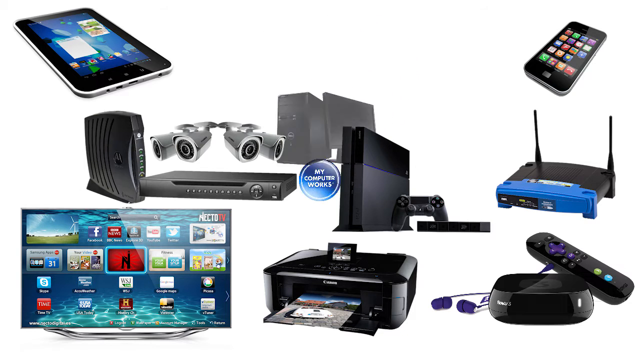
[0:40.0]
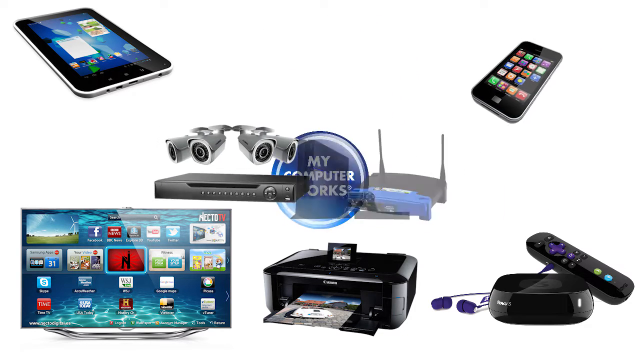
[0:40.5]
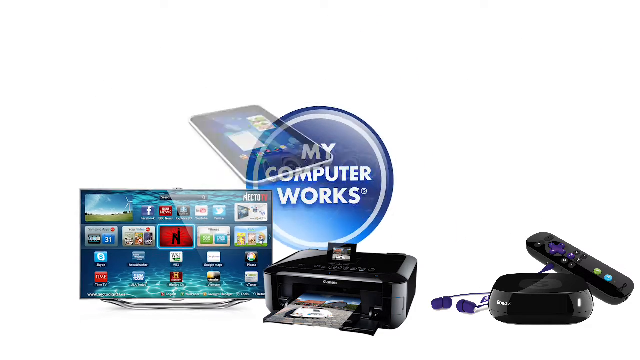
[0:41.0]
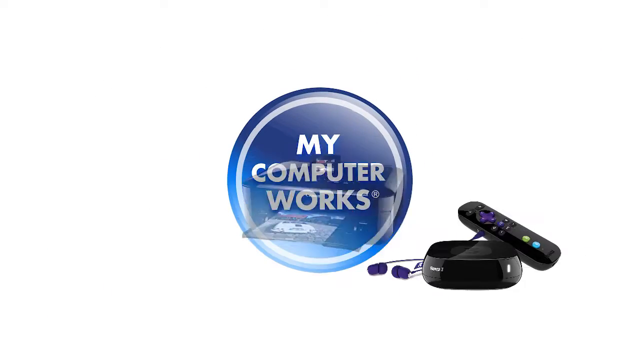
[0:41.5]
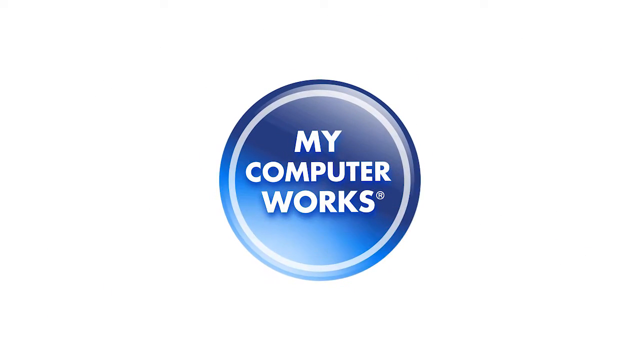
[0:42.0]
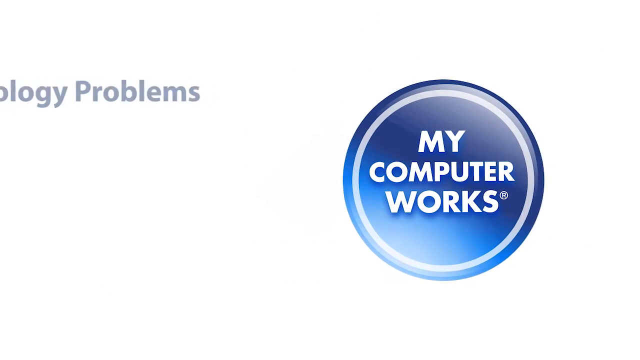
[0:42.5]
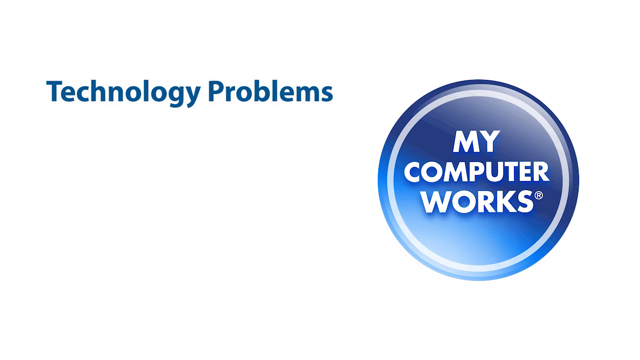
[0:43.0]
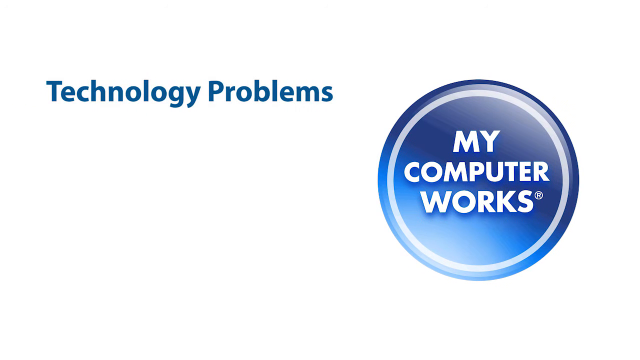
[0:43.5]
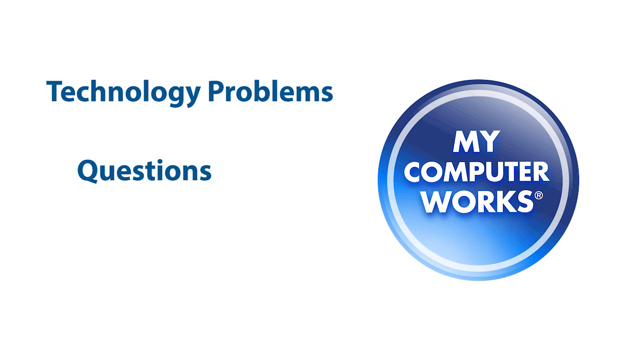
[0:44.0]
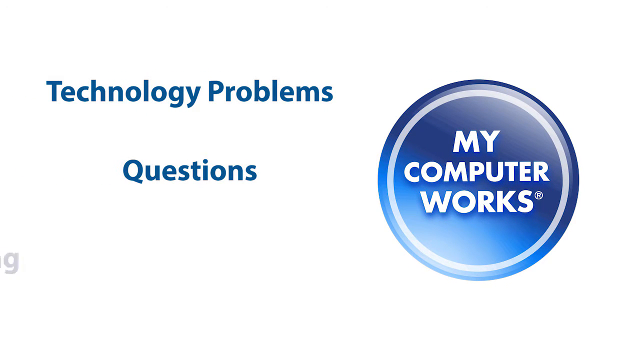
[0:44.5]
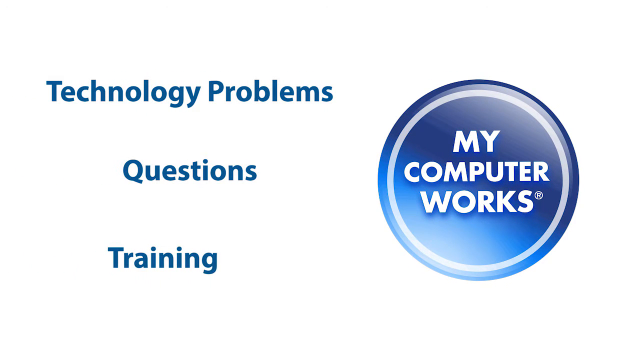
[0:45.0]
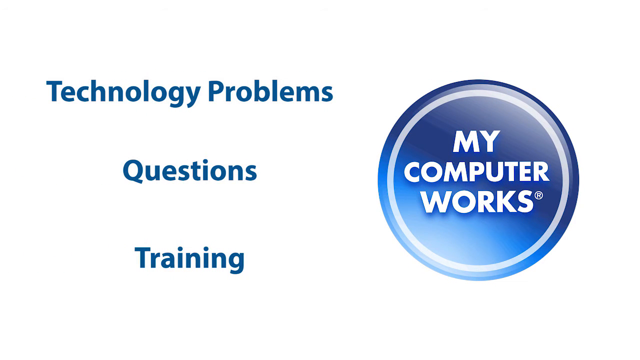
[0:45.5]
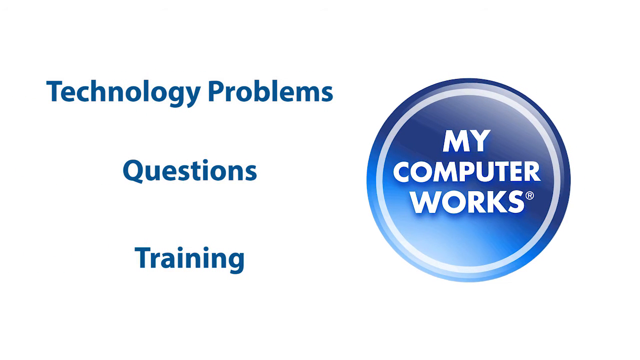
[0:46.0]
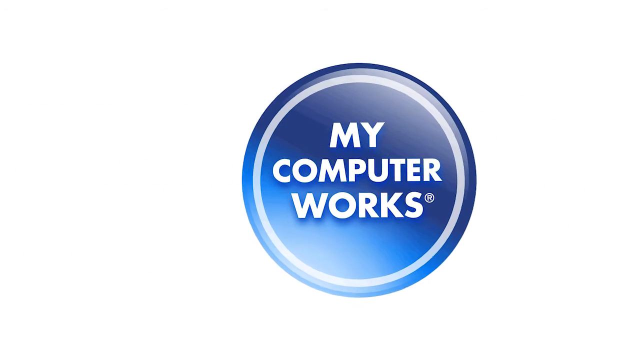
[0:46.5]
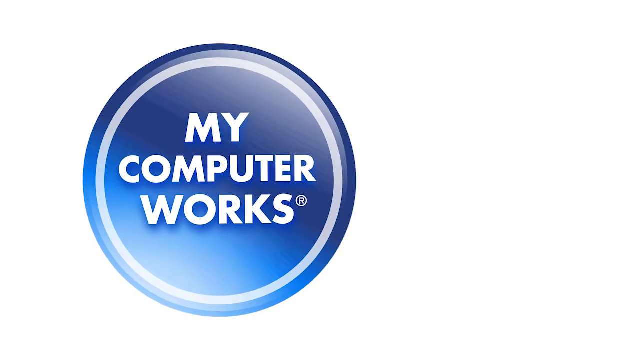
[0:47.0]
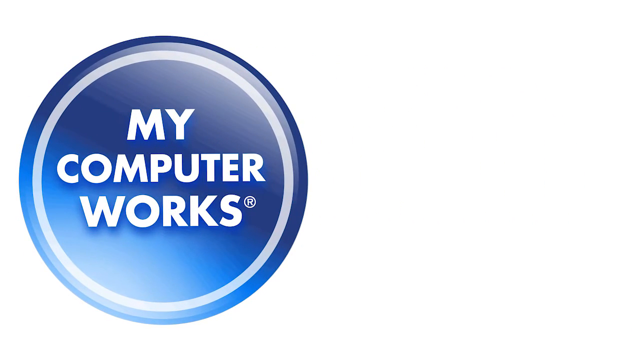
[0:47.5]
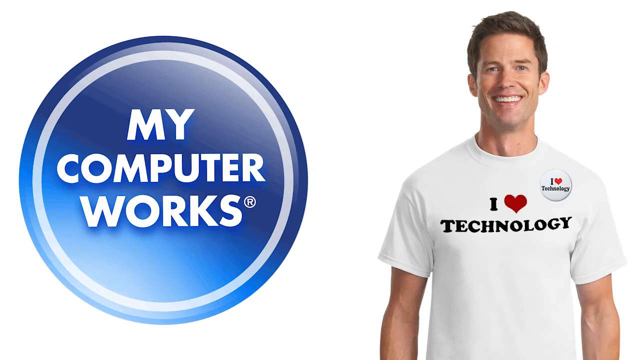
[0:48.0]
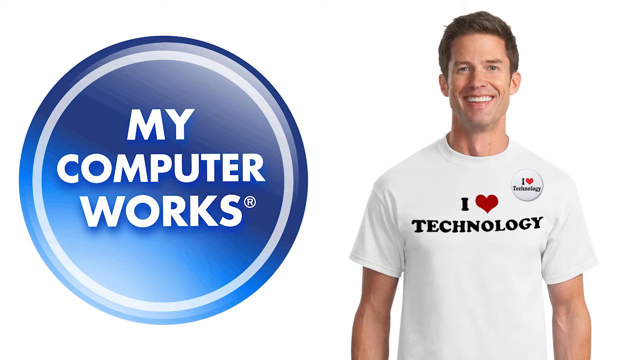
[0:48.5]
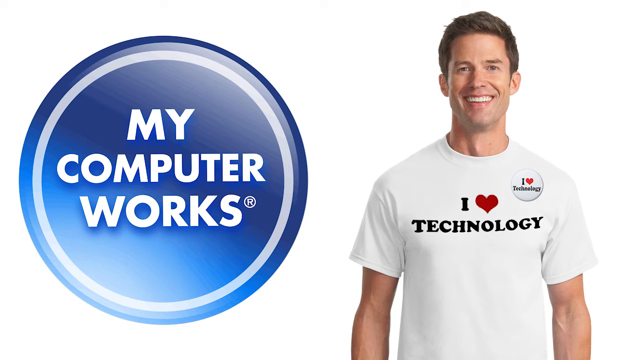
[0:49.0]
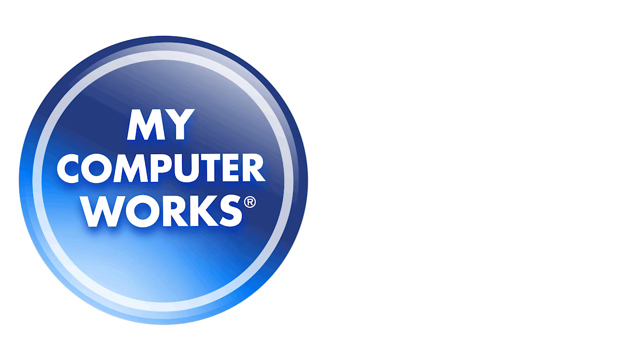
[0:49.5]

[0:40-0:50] The objects move into the centre of the screen in staggered progression as the circular blue My Computer Works logo grows in from the centre, as if absorbing the items and growing from them. After centring itself, the logo moves over to the right, and blue text slides in from the left saying "Technology Problems". Underneath, another horizontal row of blue text comes in saying "Questions", followed by more text saying "Training". The large circular logo then moves to the left-hand side of the screen as the text disappears, and it grows to dominate that side. A still cut-out image of a man is then brought into the right-hand side of the screen, moving in from the left. He is a white man with brown hair parted on the left, smiling, seen from the waist up. He wears a white T-shirt with "I Heart Technology" on it, the word "heart" shown as a red heart symbol, and a badge on his upper left chest with the same logo. He swiftly zips off to the right of the screen as a circle begins to roll out to the right from behind the My Computer Works logo.